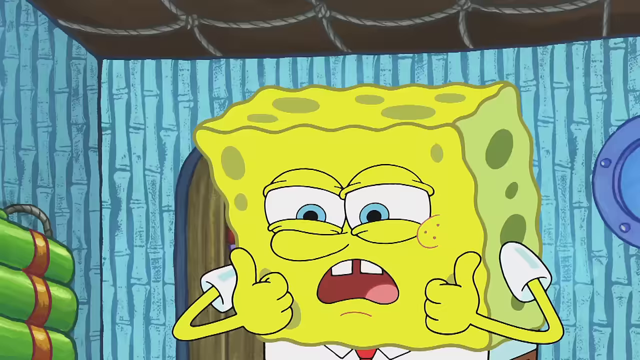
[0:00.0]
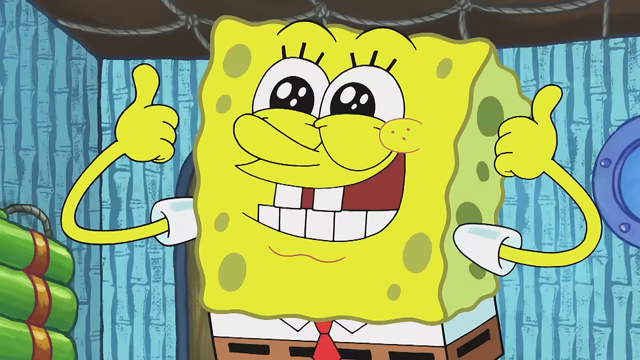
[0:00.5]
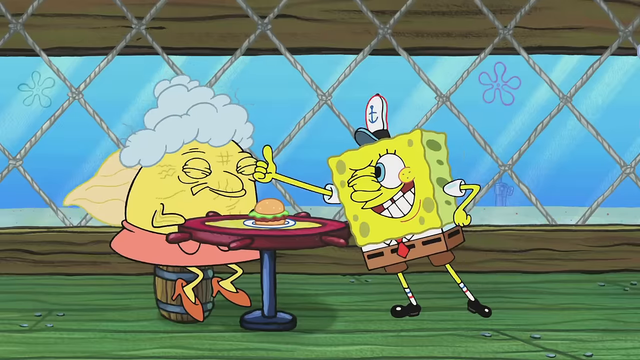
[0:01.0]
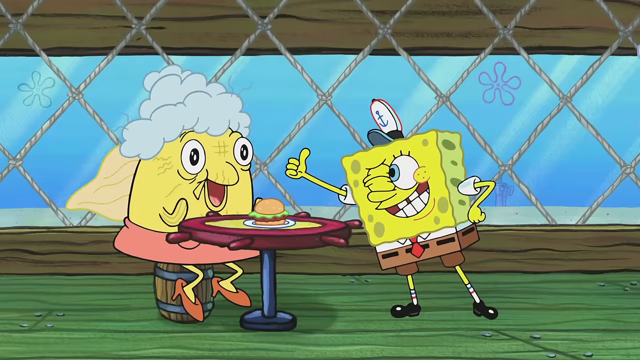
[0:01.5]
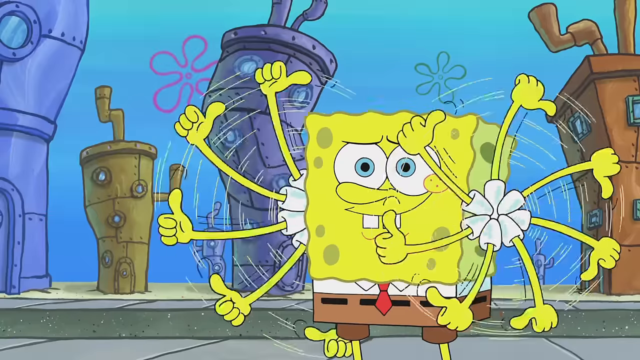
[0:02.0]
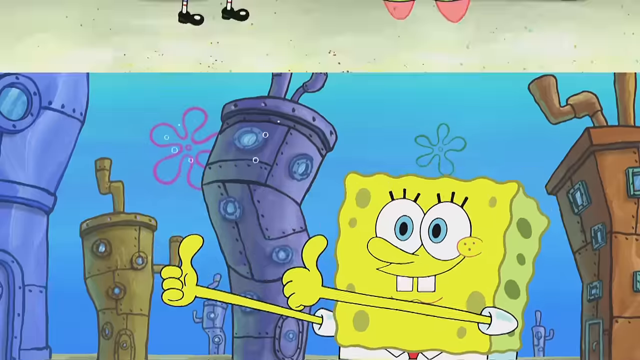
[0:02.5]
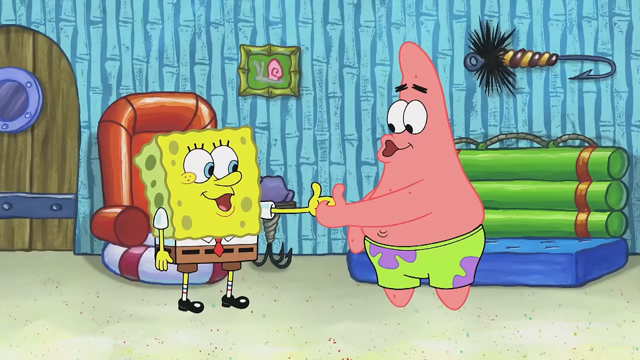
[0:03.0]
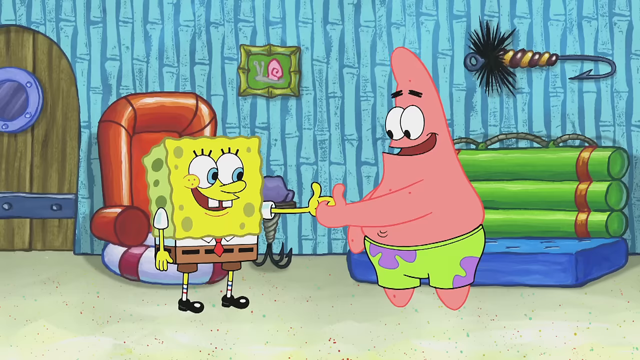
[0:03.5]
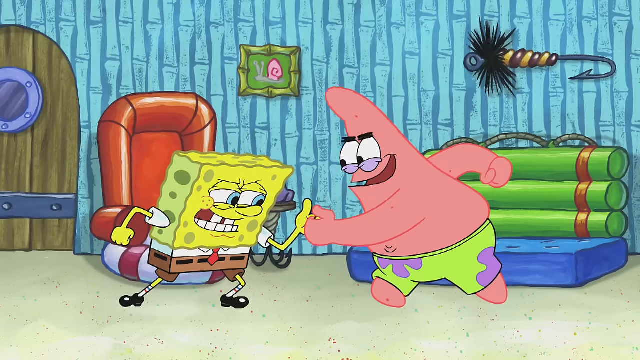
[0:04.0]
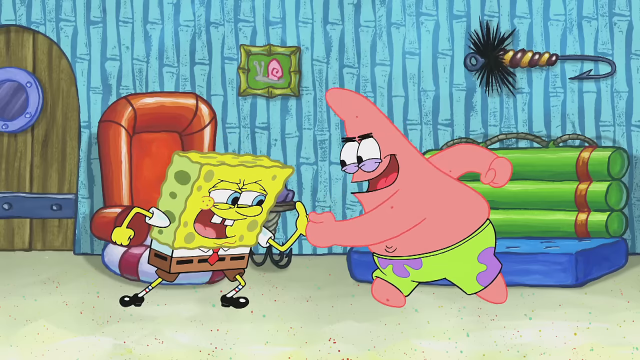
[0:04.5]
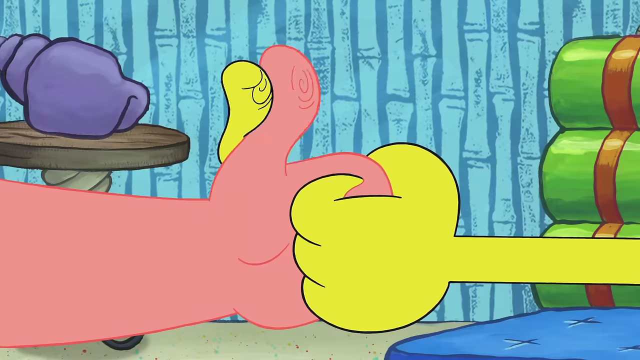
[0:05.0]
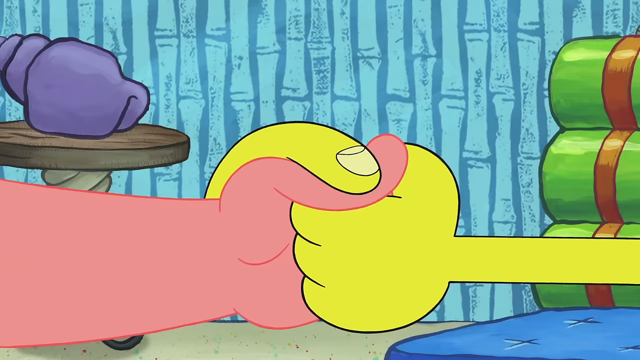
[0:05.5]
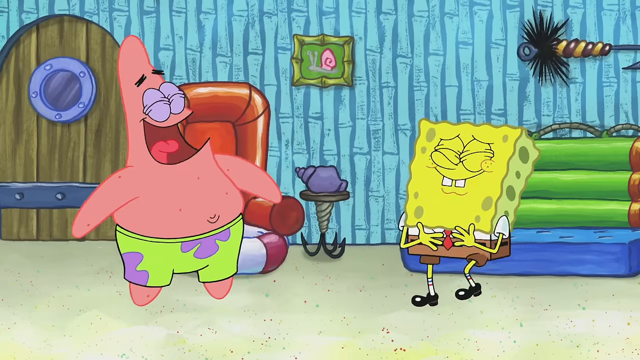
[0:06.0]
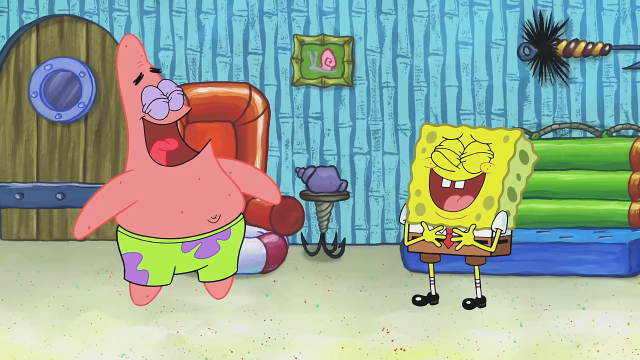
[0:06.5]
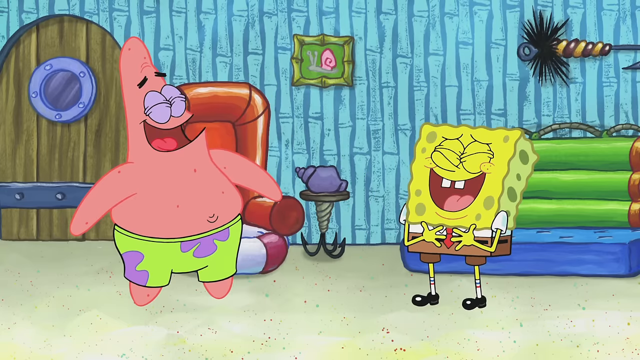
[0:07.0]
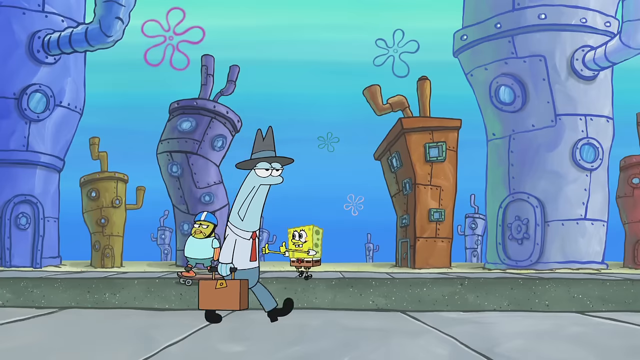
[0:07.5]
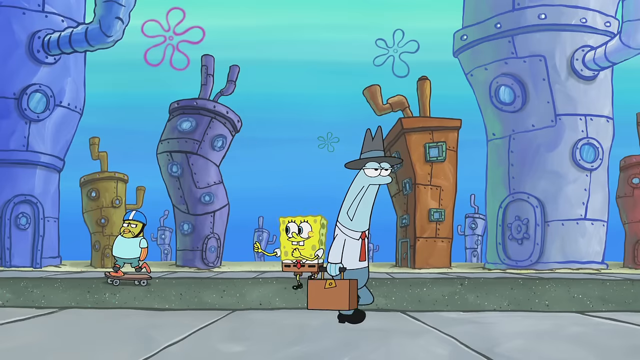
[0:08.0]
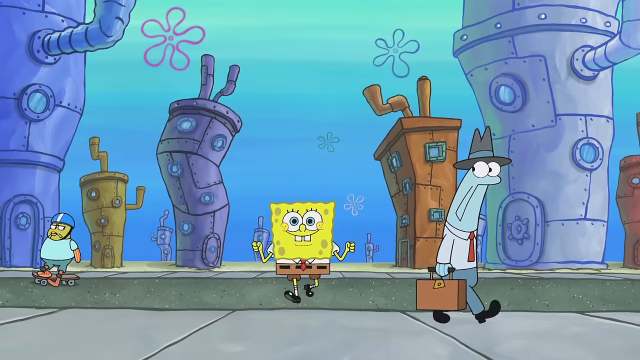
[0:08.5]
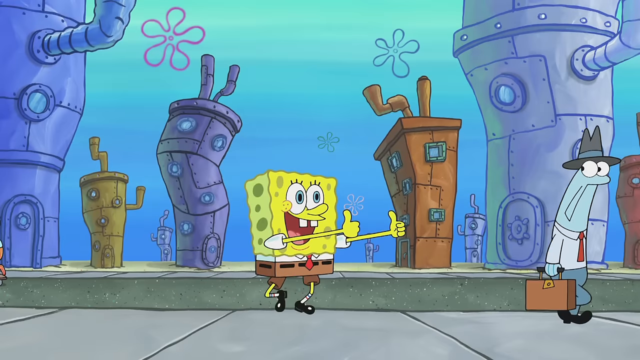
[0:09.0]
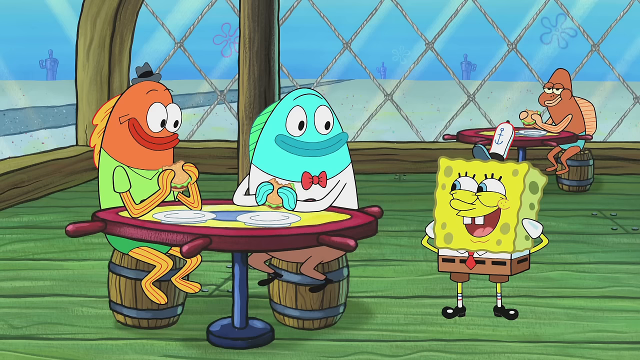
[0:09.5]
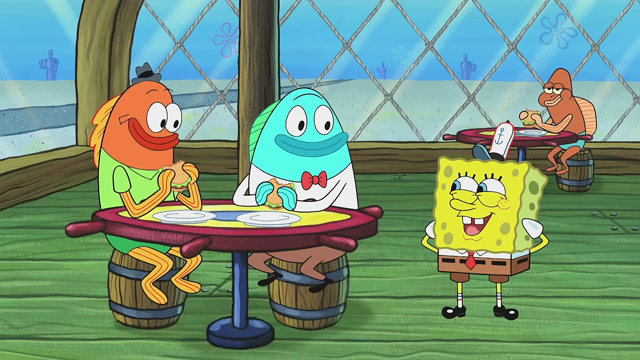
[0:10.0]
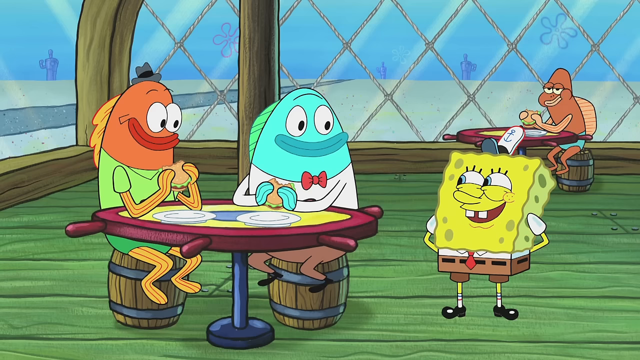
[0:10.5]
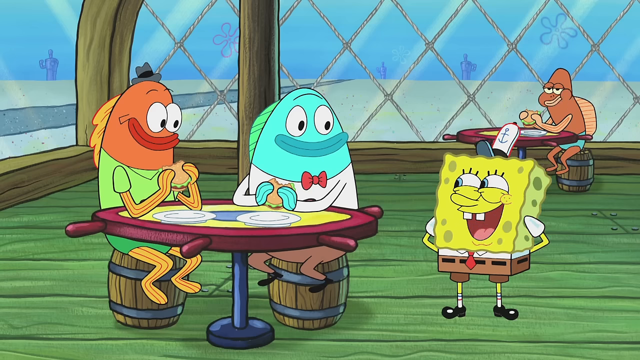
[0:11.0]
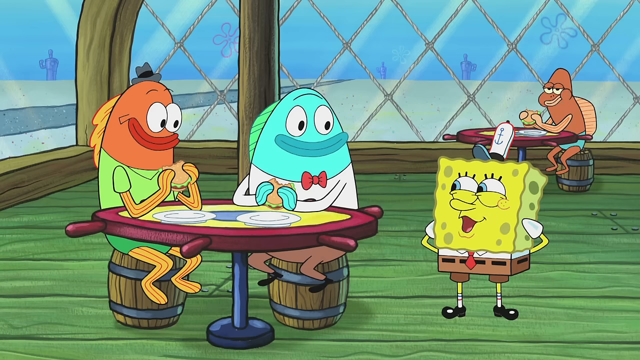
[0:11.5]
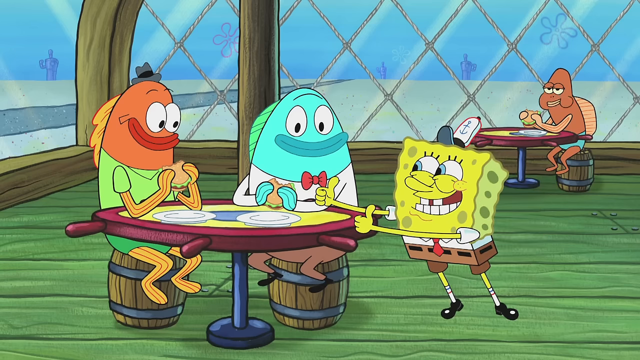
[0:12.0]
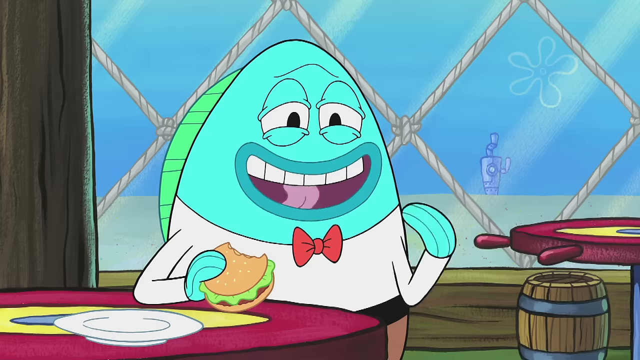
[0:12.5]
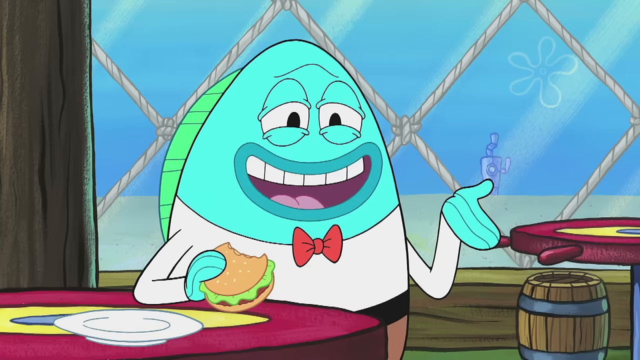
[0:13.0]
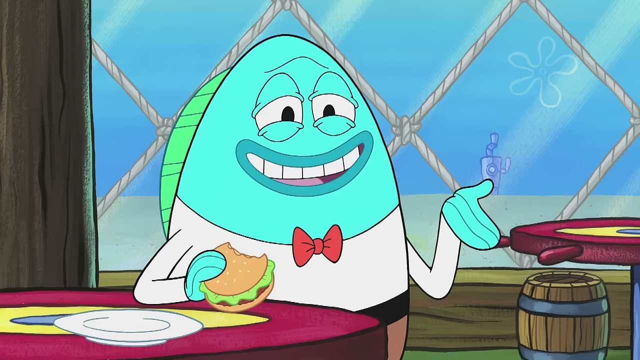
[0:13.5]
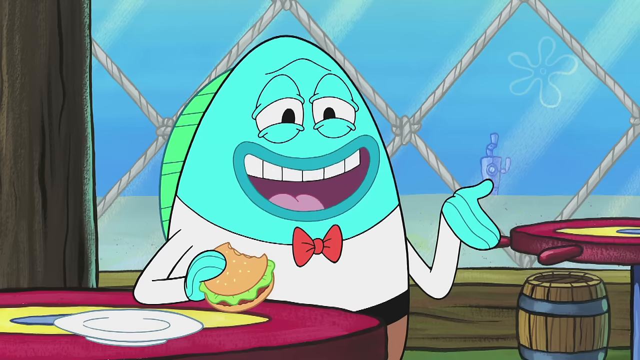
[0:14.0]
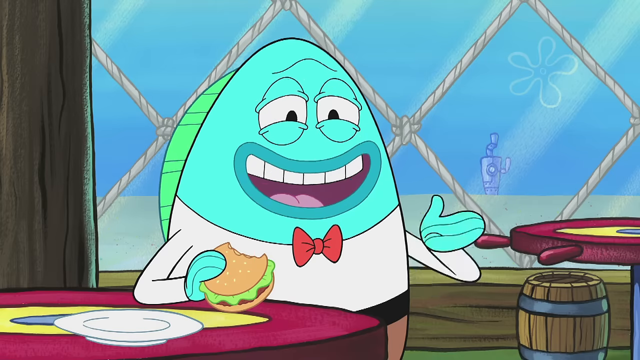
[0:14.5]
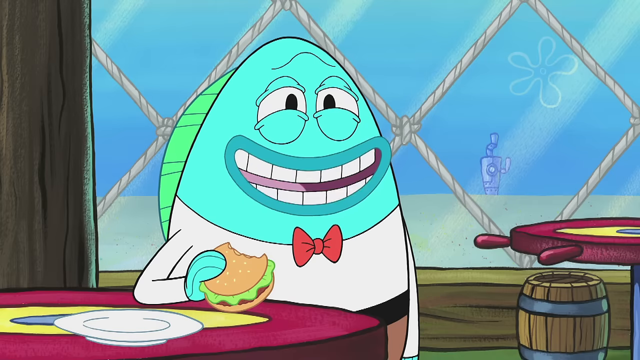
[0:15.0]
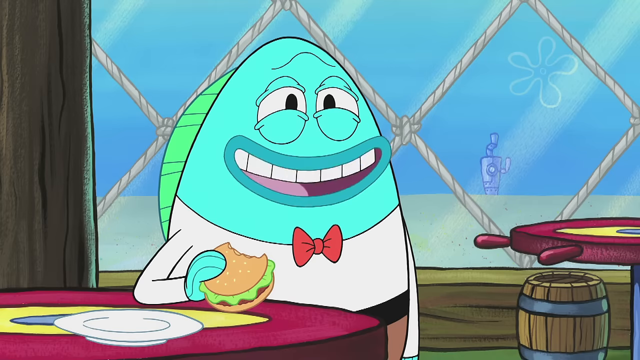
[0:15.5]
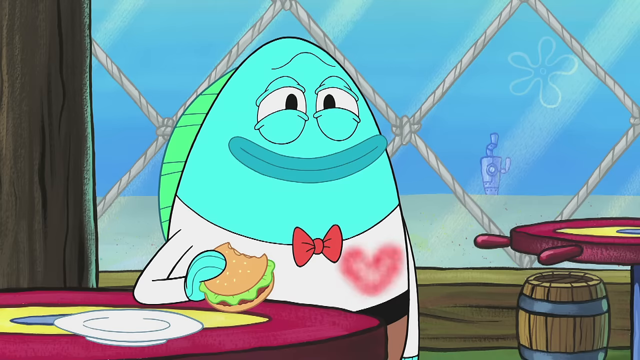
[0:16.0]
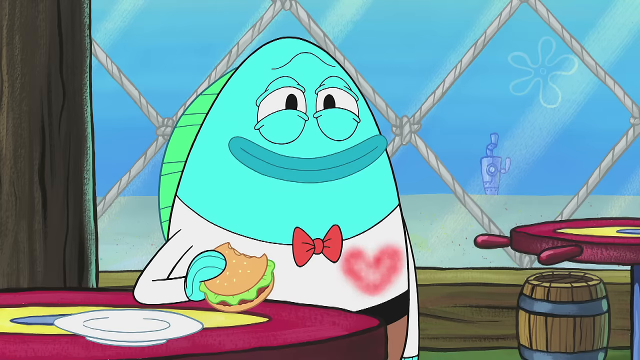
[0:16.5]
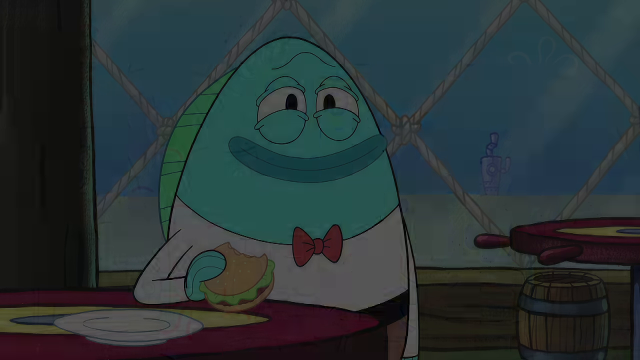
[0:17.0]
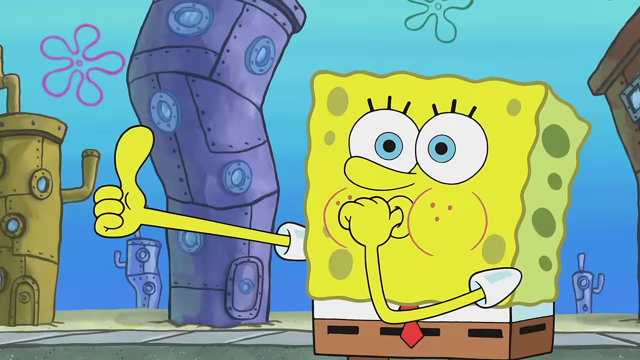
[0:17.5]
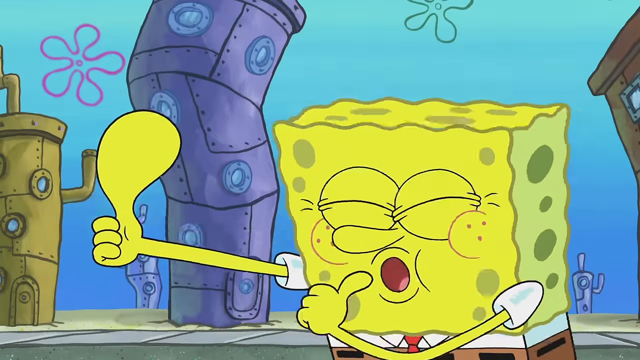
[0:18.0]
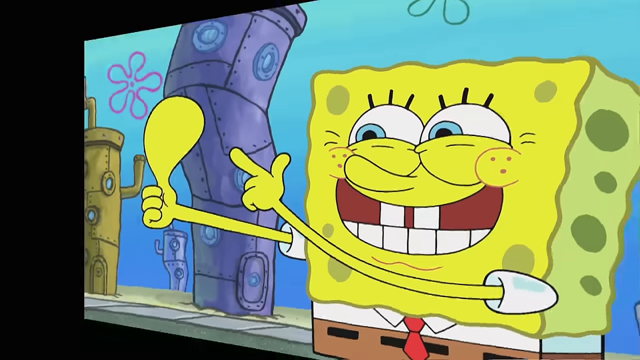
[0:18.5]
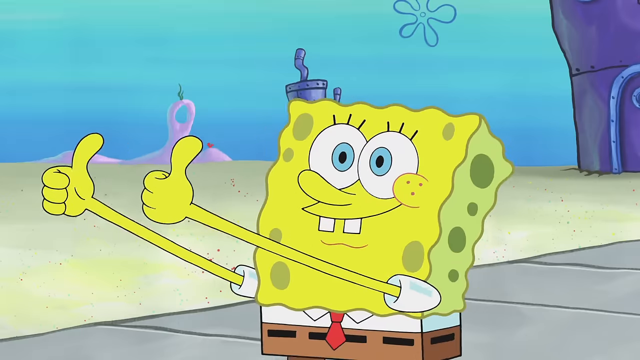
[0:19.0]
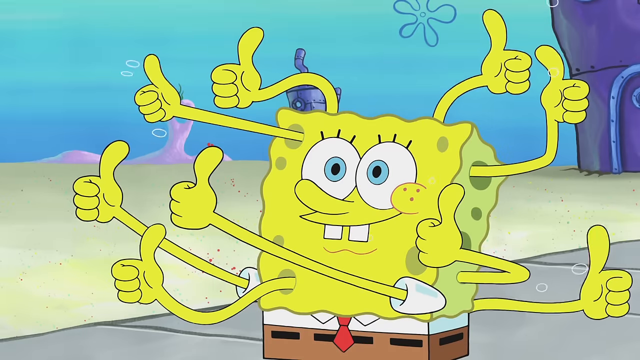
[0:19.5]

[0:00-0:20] SpongeBob appears with a green couch on the left side of the screen and a window behind him on the right. He holds both thumbs in the air, his eyes glistening with white dots inside black spaces. The scene changes to SpongeBob inside the Krusty Krab with a yellow customer wearing a pink skirt. SpongeBob gives the customer a thumbs up and winks with his right eye, and the customer smiles, ecstatic. Next, SpongeBob is outside again on the ocean floor with houses behind him; he waves his arms like a helicopter before giving a thumbs up. Inside SpongeBob's house, he and Patrick have a thumb-wrestling match, and when it ends they laugh together. SpongeBob then appears outside on a road where two passersby, one on a skateboard and the other holding a suitcase, walk in opposite directions; SpongeBob walks across the street giving both of them thumbs up. Back inside the Krusty Krab, SpongeBob talks to two customers: one is blue and wears a red bow tie, a red shirt and beige pants, and the other is maroon and wears a green t-shirt and dark green pants. Both eat Krabby Patties. The focus shifts to the blue customer as he talks with SpongeBob, and a red heart appears above his shirt. Finally, SpongeBob is on the street giving a series of thumbs up.